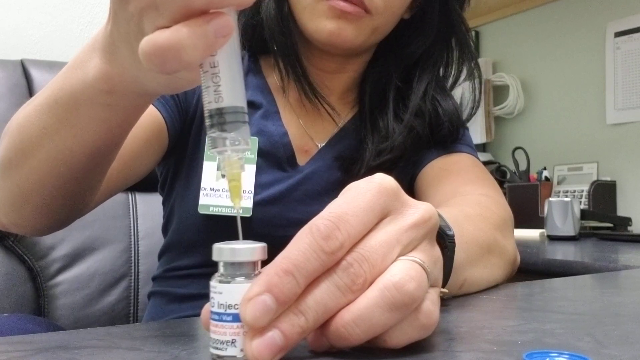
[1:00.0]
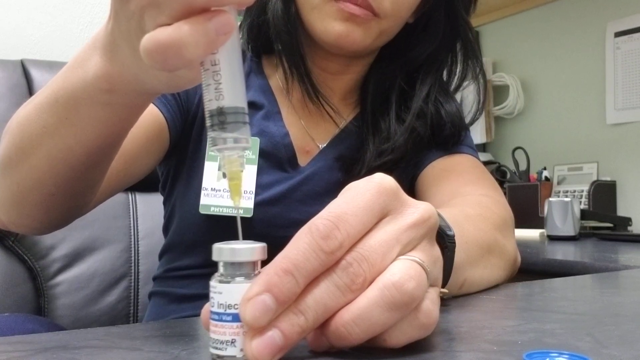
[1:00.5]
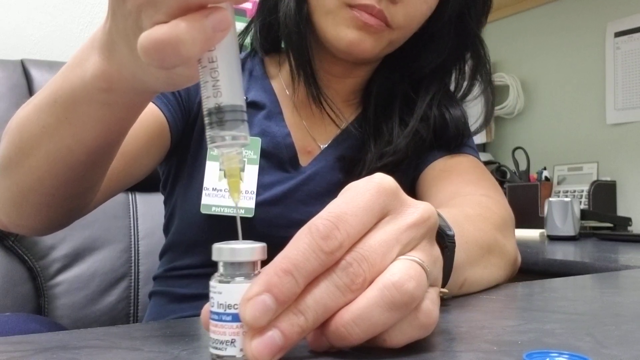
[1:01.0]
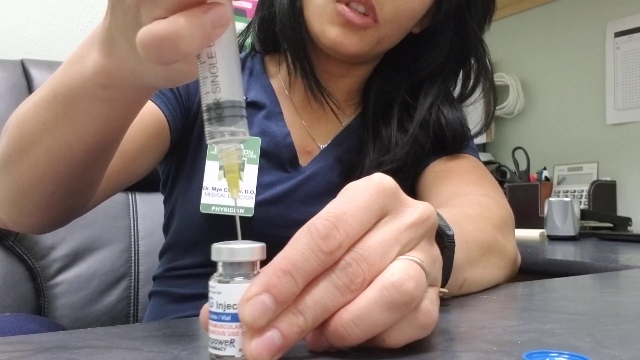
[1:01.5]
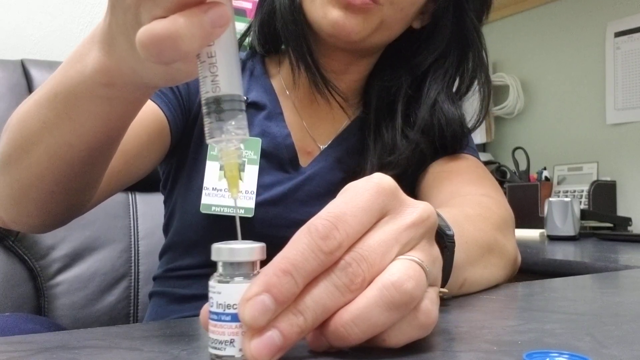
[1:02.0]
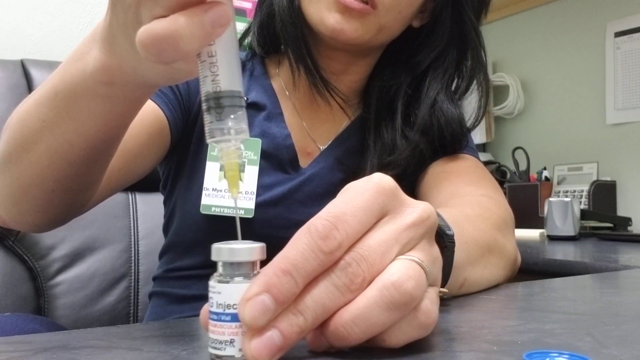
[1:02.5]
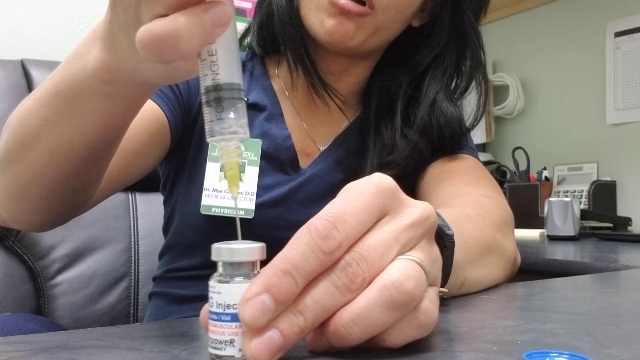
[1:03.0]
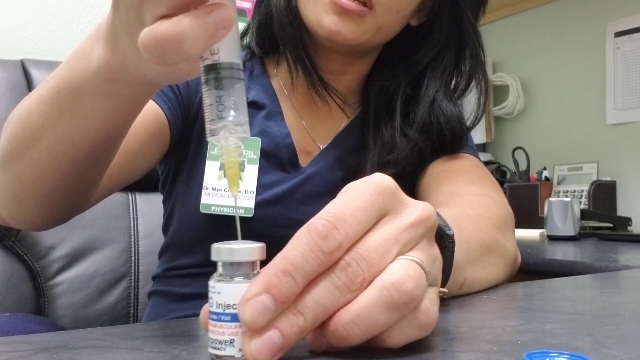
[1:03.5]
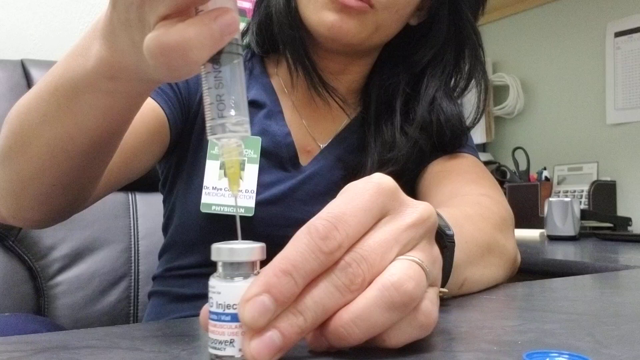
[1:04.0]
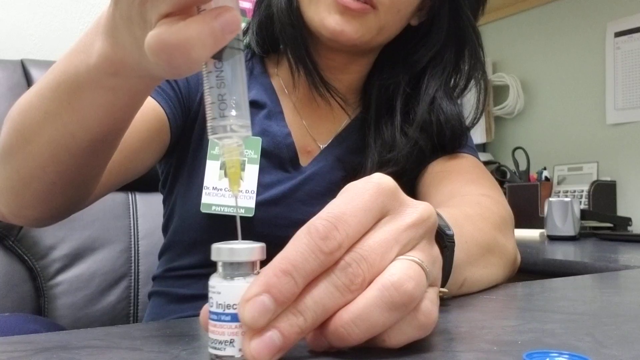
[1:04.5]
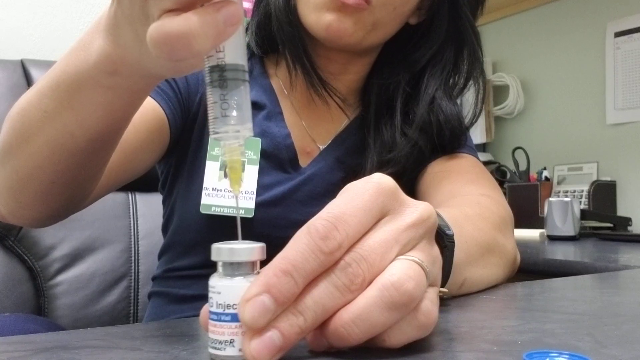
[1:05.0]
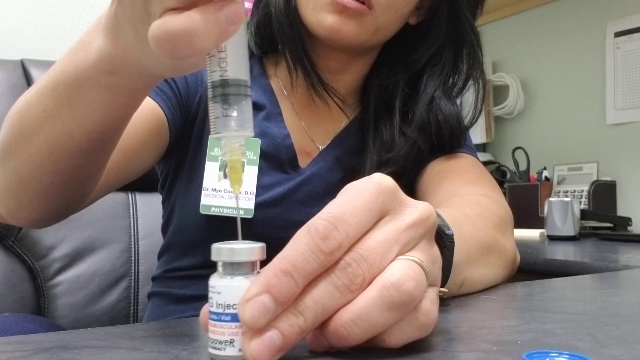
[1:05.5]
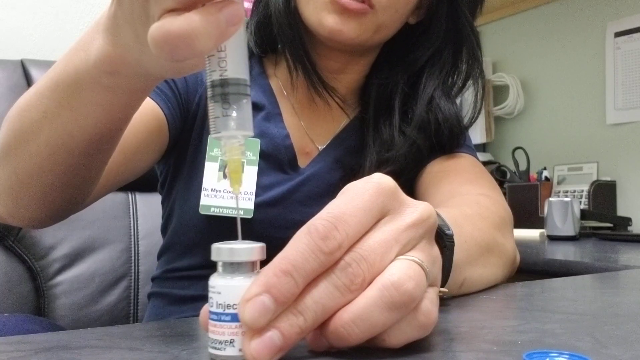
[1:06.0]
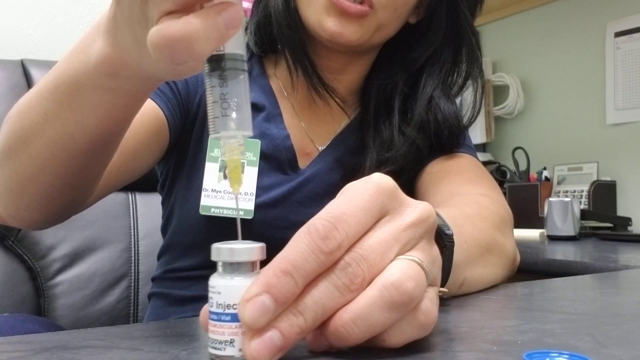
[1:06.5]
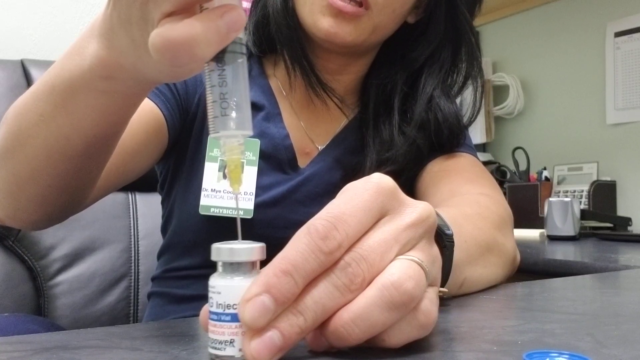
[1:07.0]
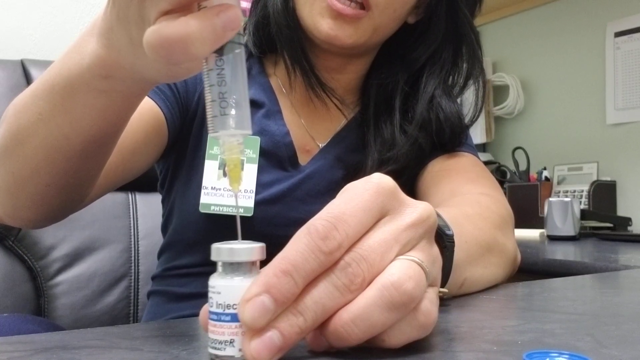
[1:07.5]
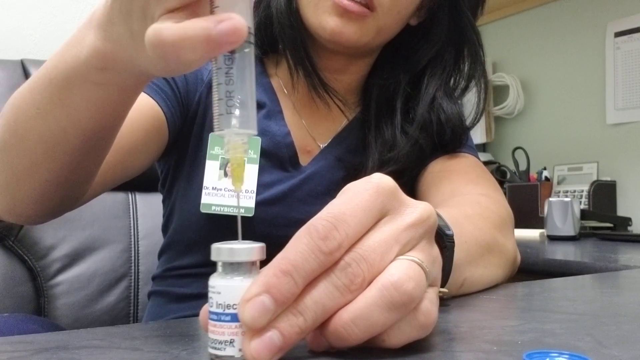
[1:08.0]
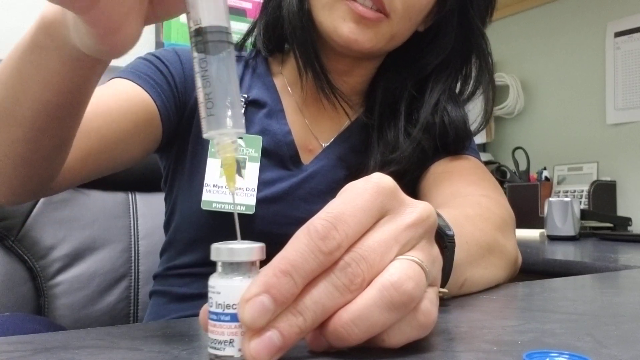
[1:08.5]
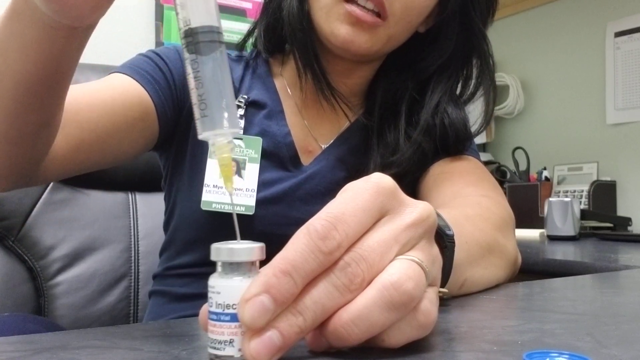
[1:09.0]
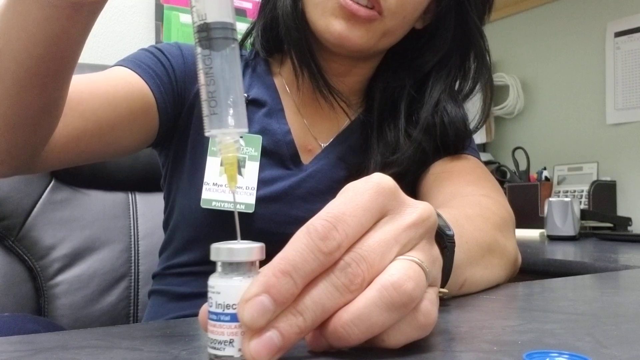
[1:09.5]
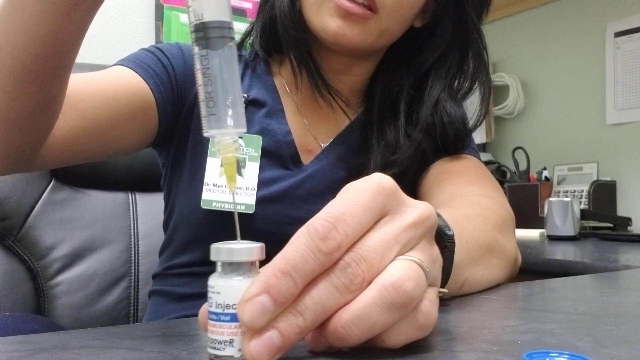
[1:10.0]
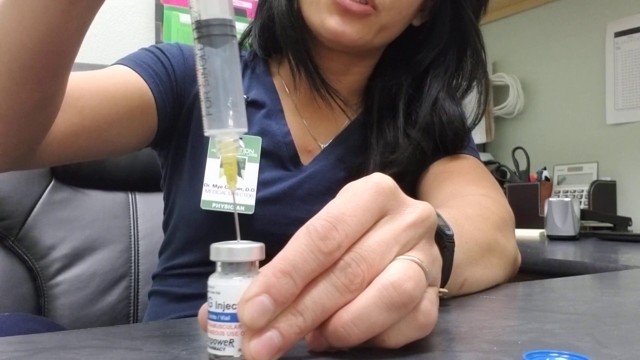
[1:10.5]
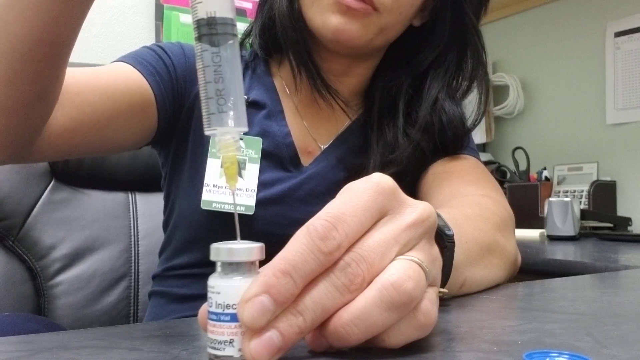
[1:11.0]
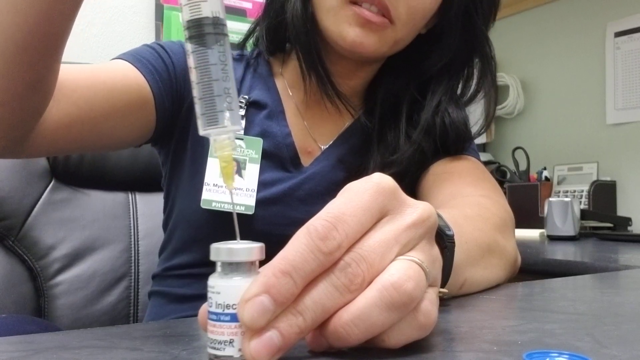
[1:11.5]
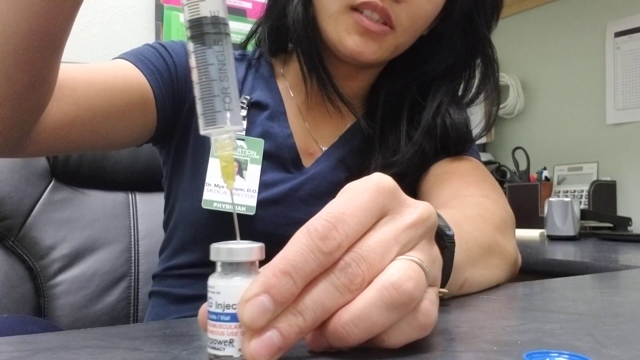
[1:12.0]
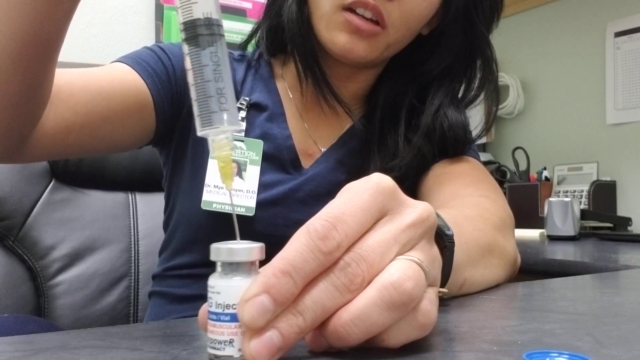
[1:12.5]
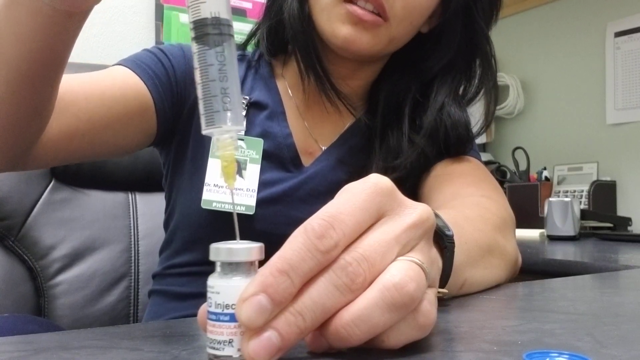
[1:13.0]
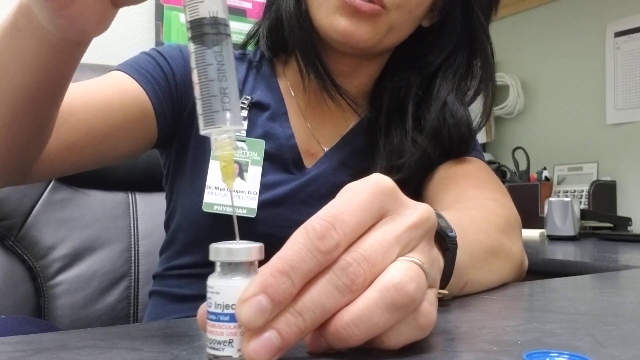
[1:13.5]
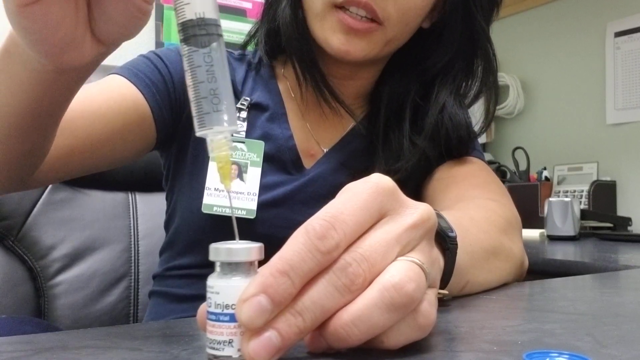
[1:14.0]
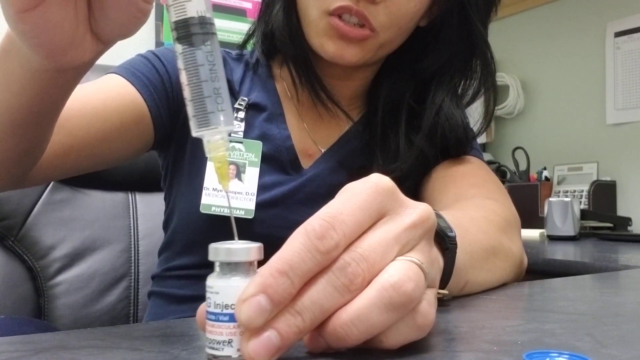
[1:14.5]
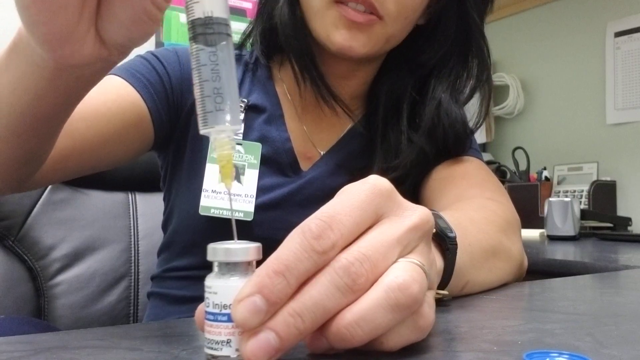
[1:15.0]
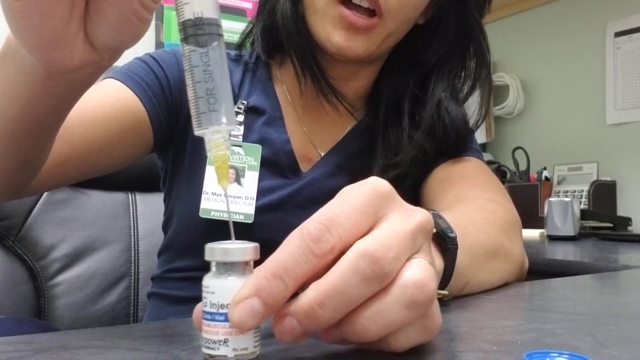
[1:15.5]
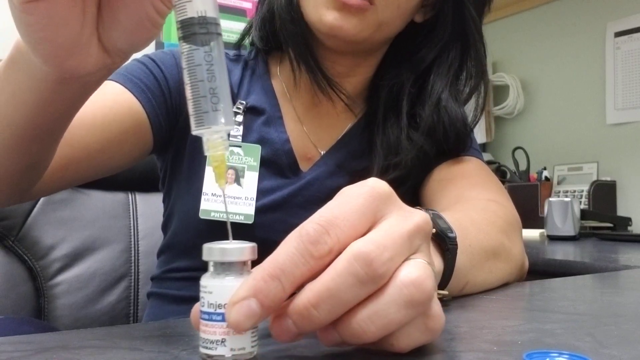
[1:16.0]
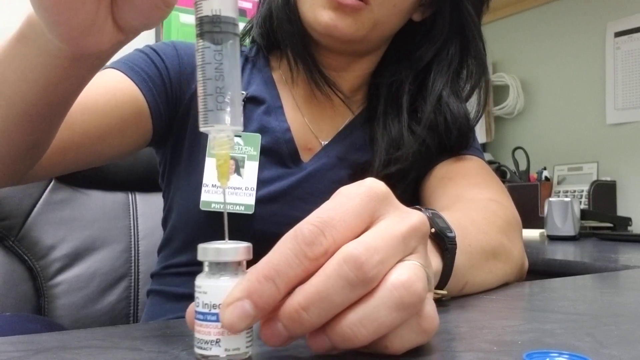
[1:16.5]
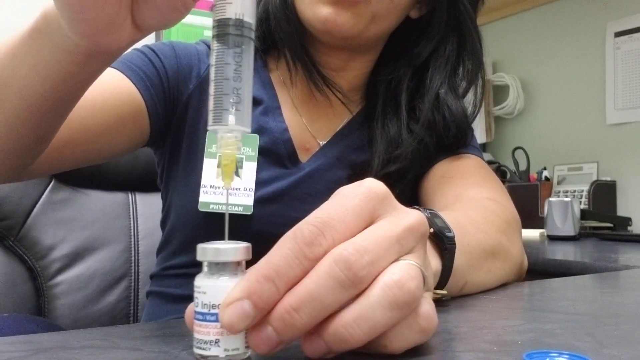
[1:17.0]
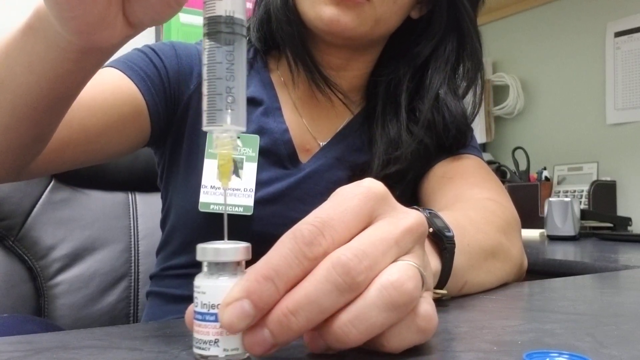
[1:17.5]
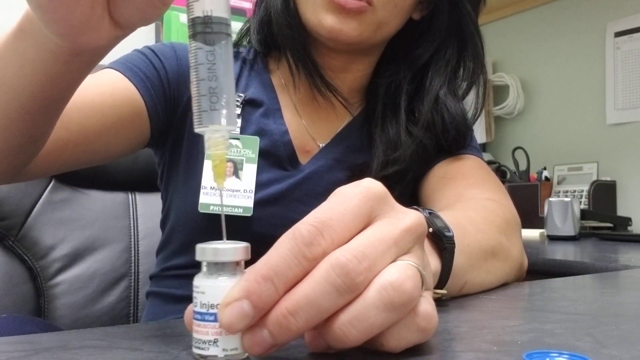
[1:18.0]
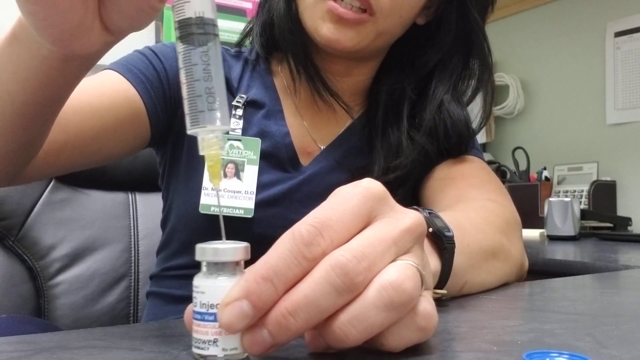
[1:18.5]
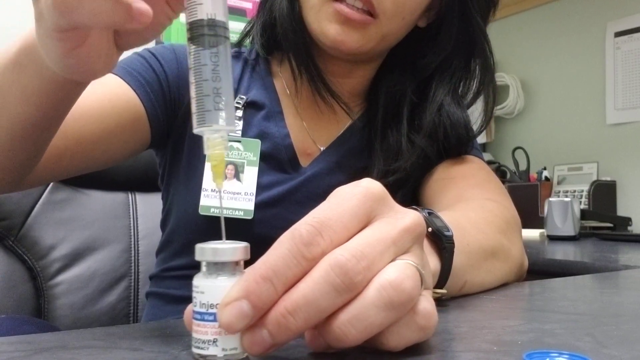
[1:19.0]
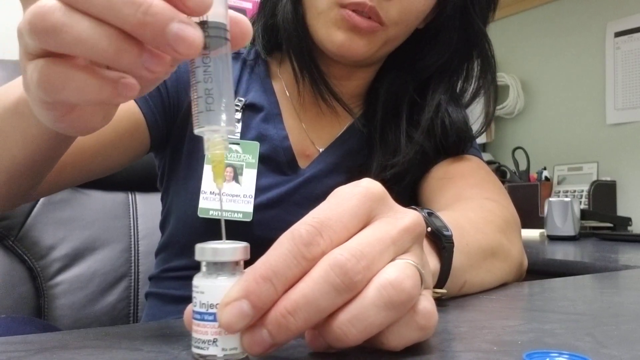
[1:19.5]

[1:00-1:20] A woman is seated at a desk in an office chair in a medical office, visible only from the lips down, showing the top of her torso and her arms. She has an extraction syringe device in her right hand and, in her left hand, a small bottle the size of a regular pill bottle; the syringe part of the device and the needle are inserted into the top of the bottle. She withdraws liquid from the bottle while speaking to the camera. The label on the front of the bottle says "HCG injector", and liquid fills the tube as she pulls the stopper up to the top of the device. The shot ends on a still frame of her showing how the liquid goes into the injection device.